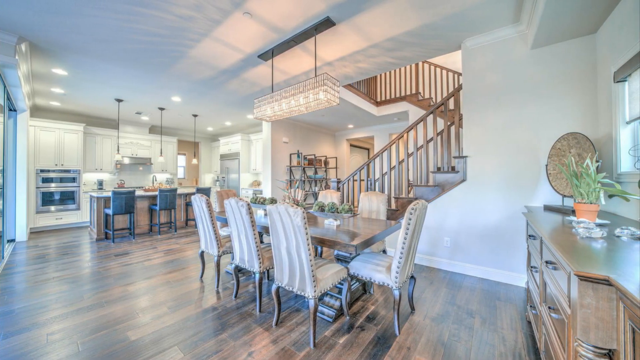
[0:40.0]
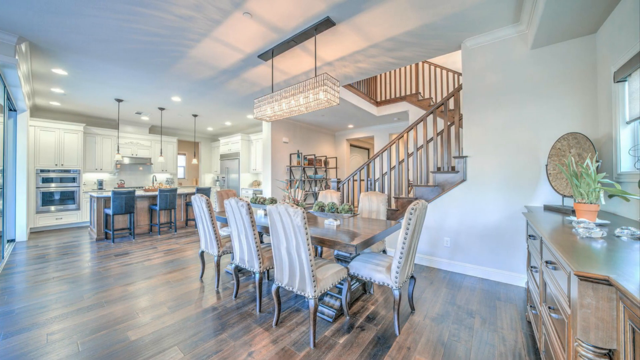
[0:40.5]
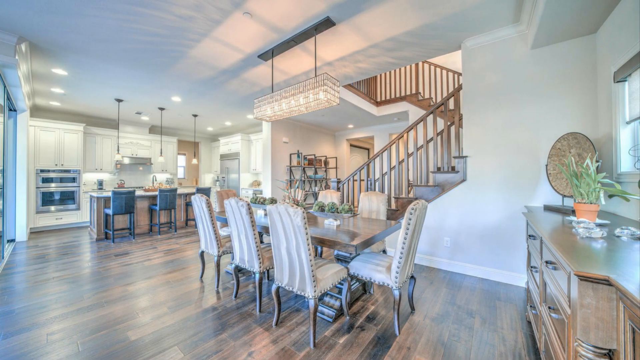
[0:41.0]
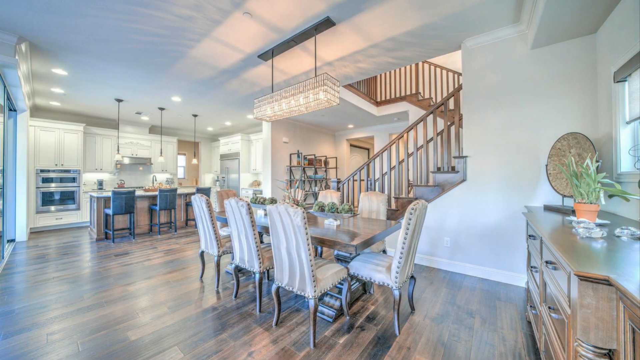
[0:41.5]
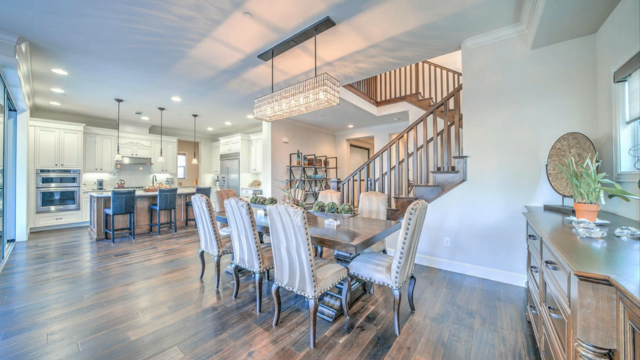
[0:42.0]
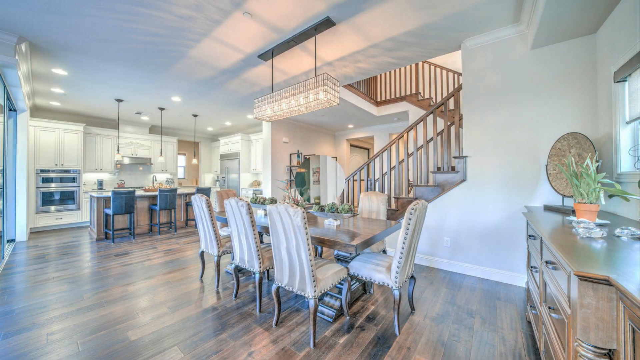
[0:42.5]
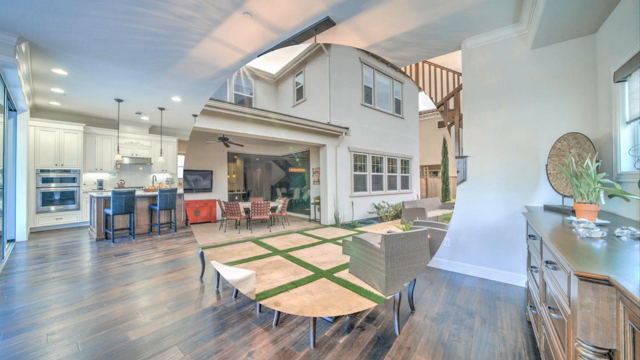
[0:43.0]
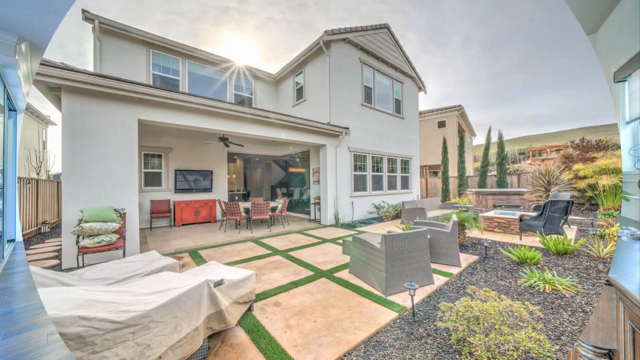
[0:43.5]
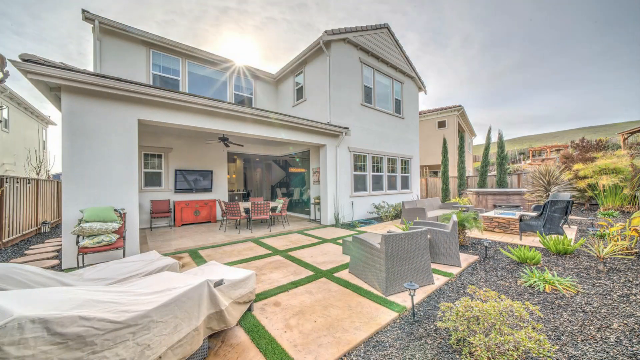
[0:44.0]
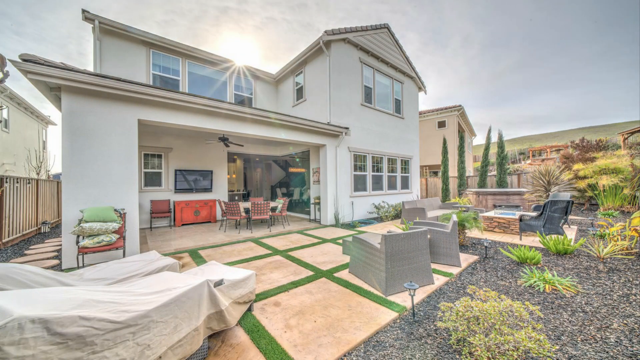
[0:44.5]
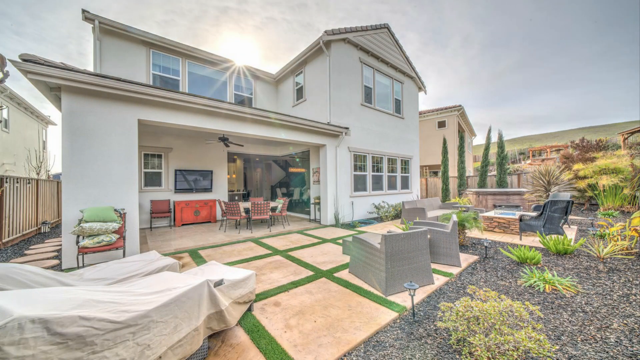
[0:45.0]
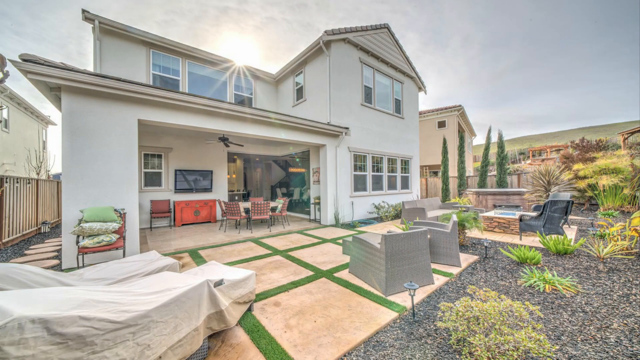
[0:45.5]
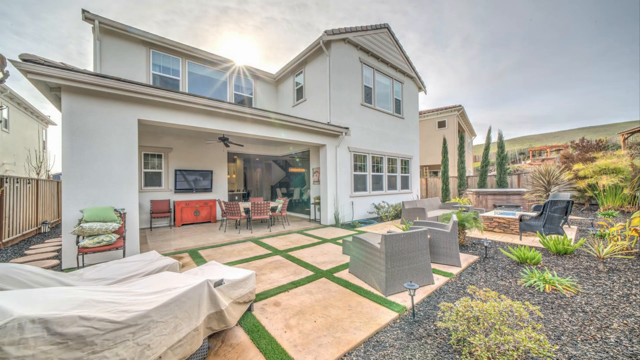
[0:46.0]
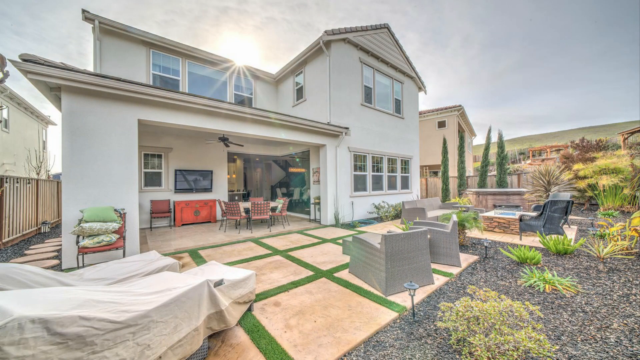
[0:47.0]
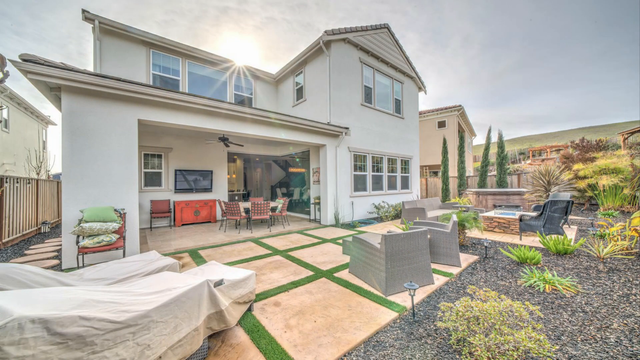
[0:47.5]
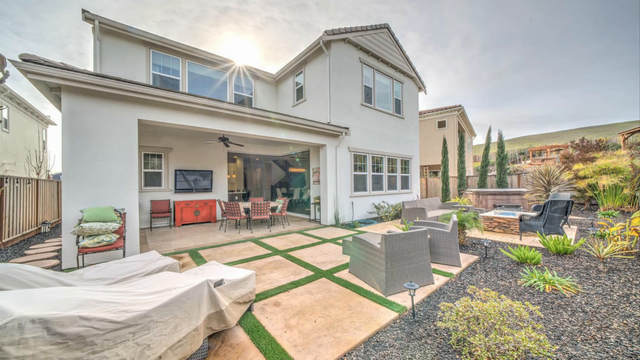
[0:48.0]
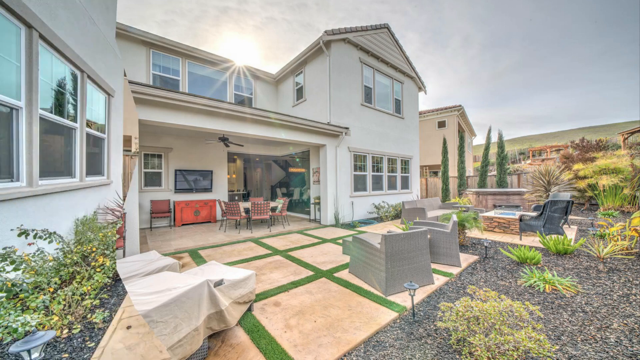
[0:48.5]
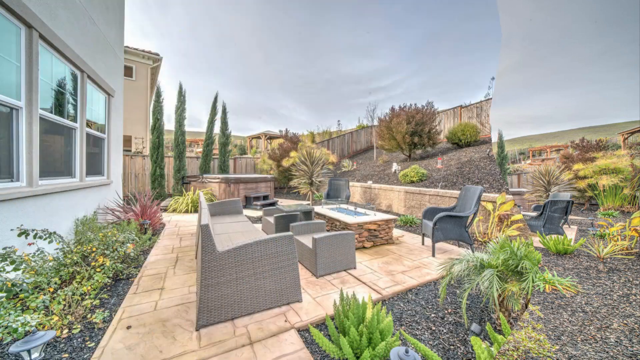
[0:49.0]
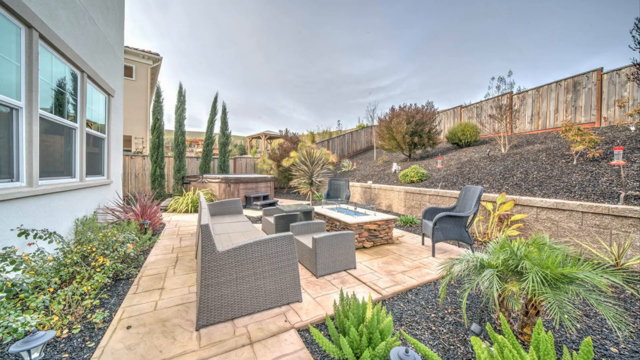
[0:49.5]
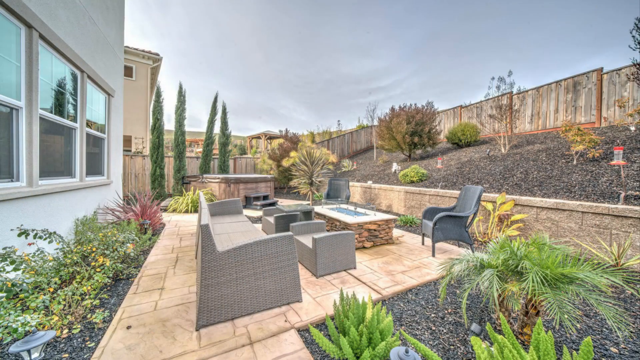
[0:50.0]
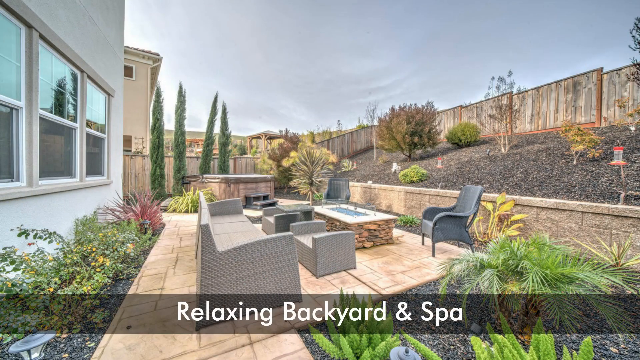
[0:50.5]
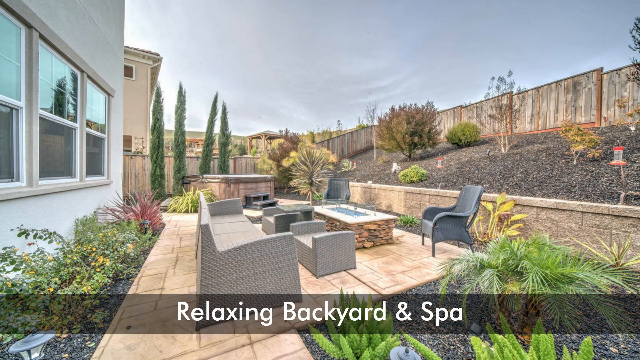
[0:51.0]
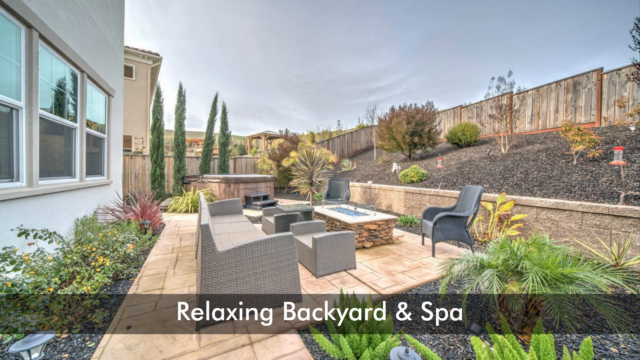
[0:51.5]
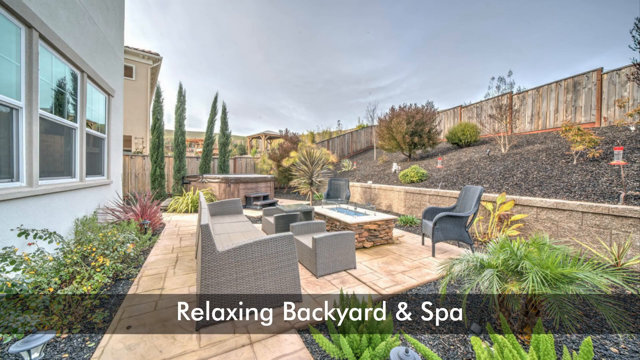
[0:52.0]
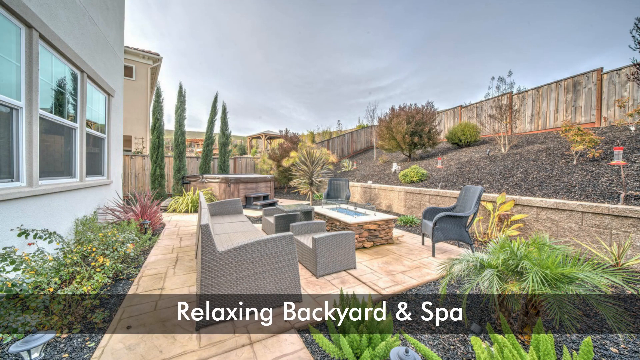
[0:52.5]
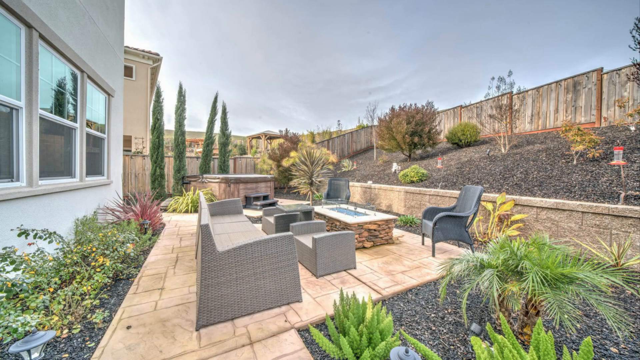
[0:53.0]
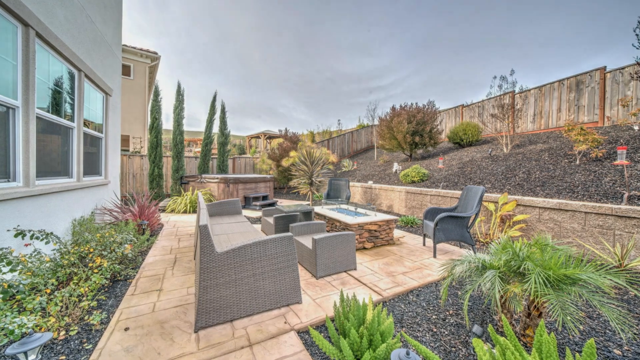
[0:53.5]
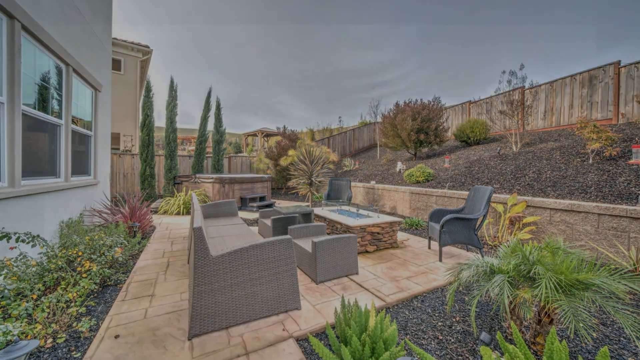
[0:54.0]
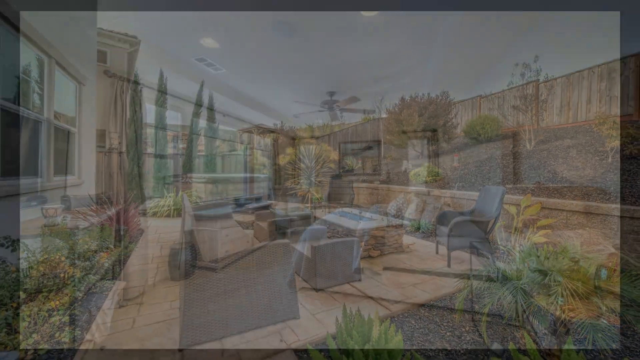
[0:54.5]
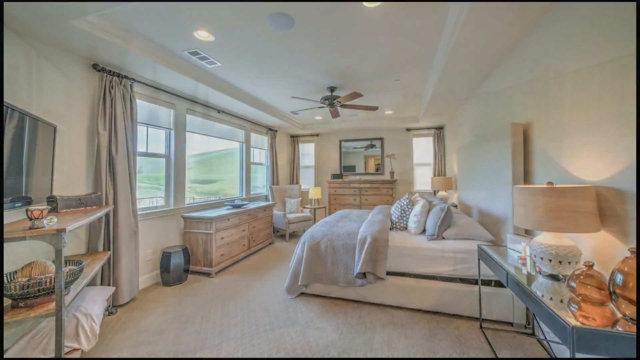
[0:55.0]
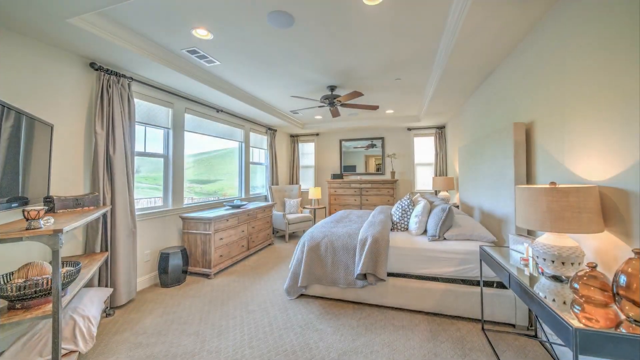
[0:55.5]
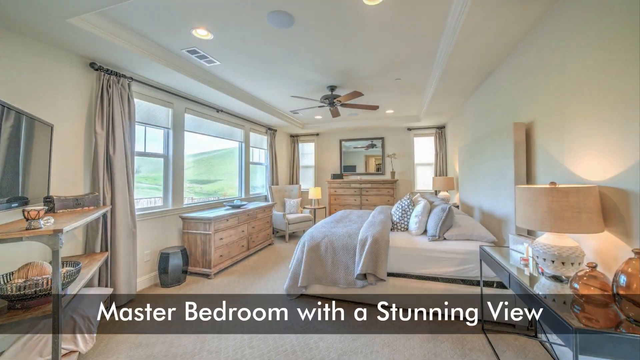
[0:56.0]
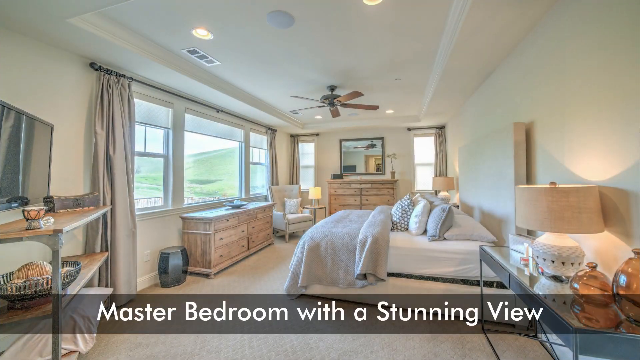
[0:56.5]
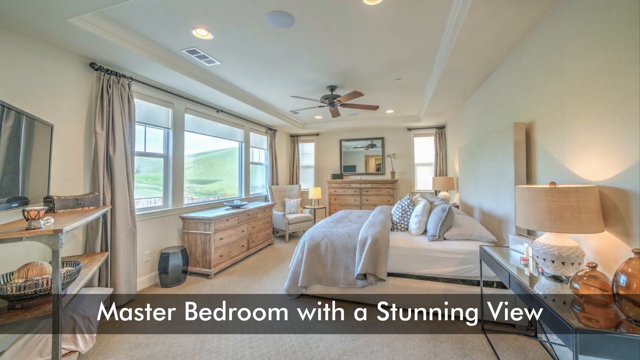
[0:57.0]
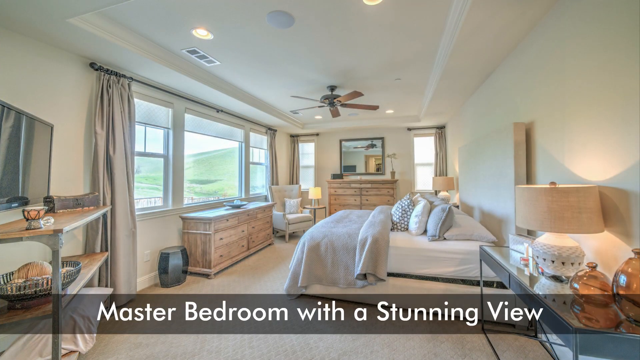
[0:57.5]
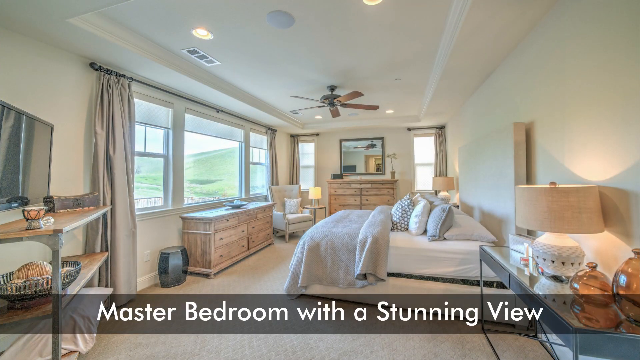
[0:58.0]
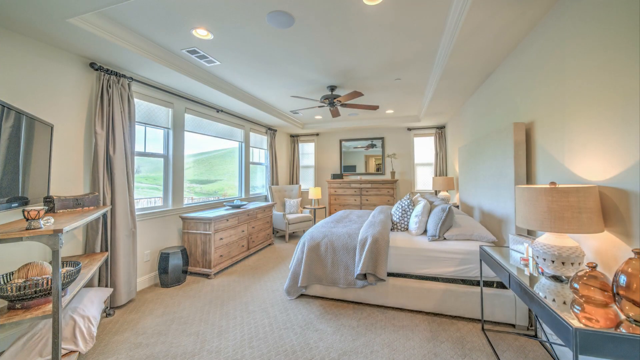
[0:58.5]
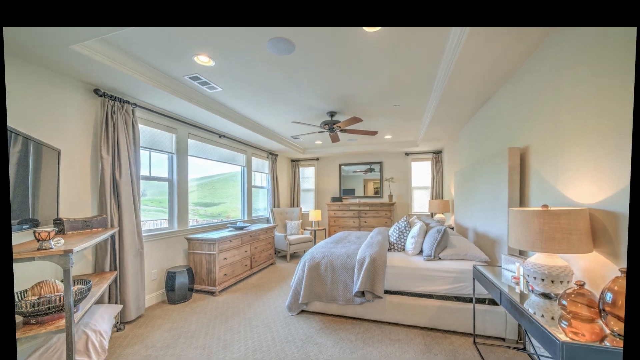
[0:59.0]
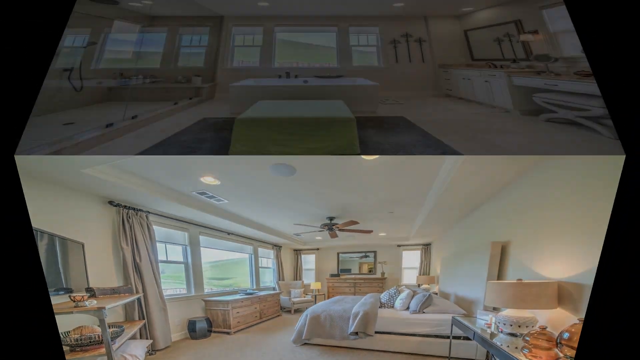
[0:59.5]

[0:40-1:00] The video shows the outside of the house, including a backyard and spa, as well as the master bedroom with its view. A kitchen is also shown, and the video presents both the interior and the exterior of the property.